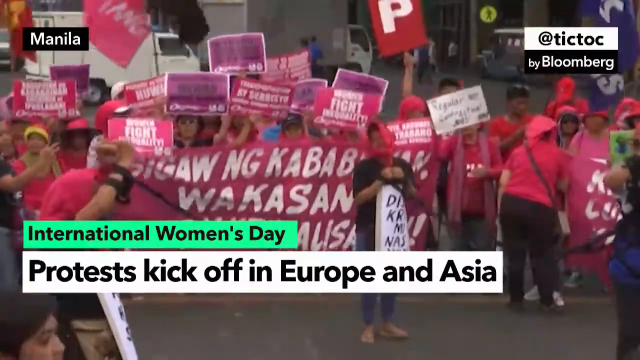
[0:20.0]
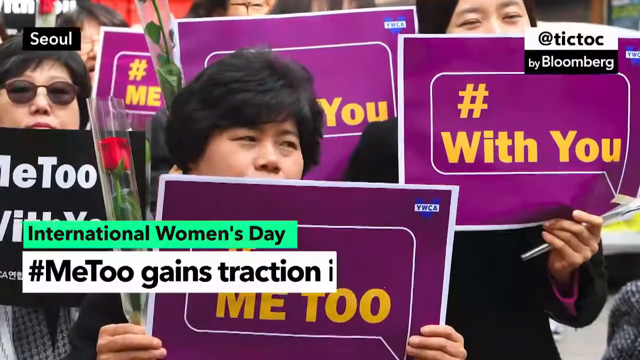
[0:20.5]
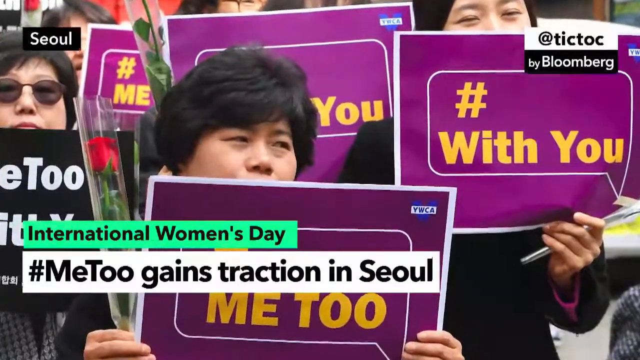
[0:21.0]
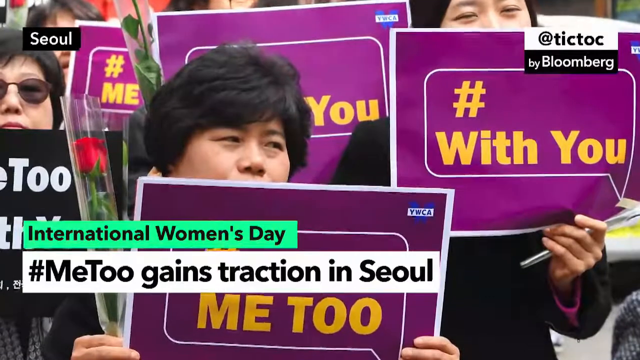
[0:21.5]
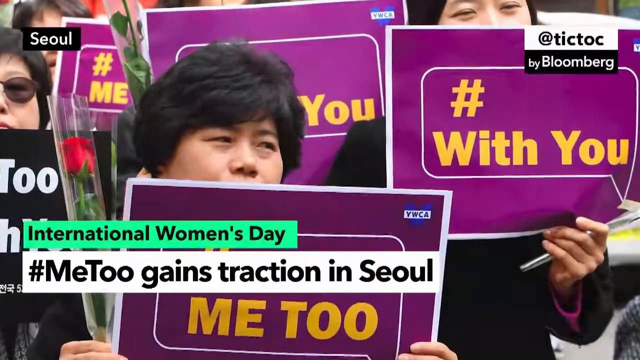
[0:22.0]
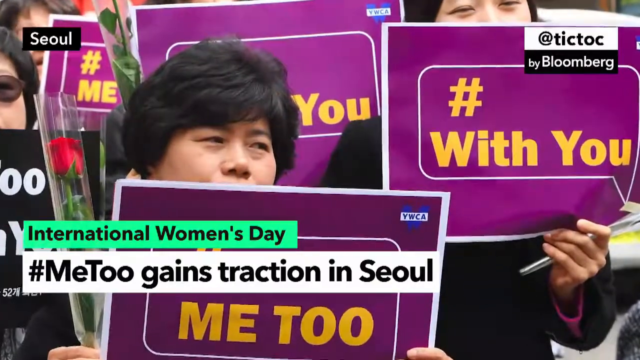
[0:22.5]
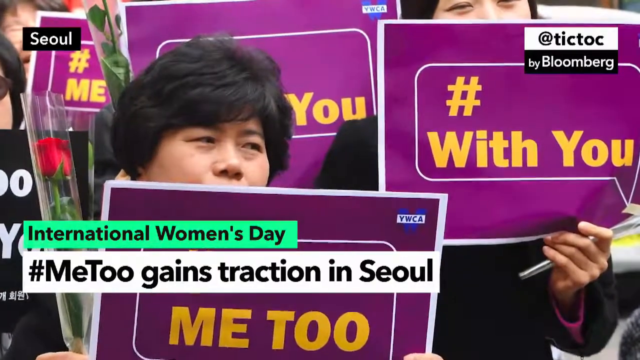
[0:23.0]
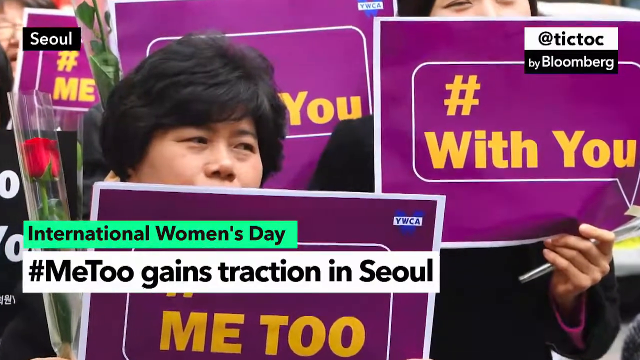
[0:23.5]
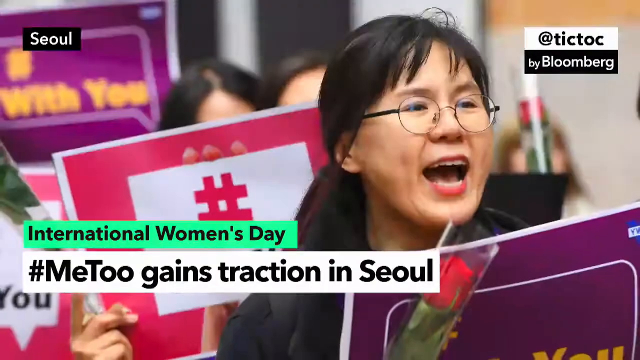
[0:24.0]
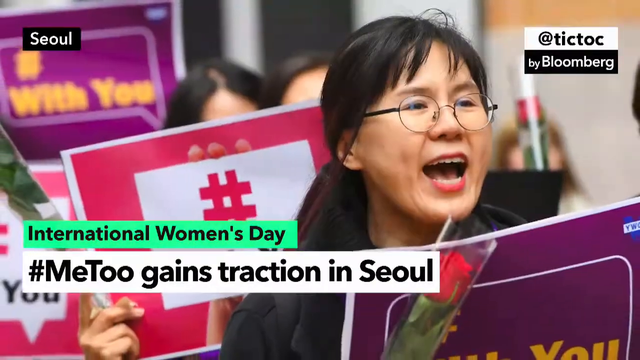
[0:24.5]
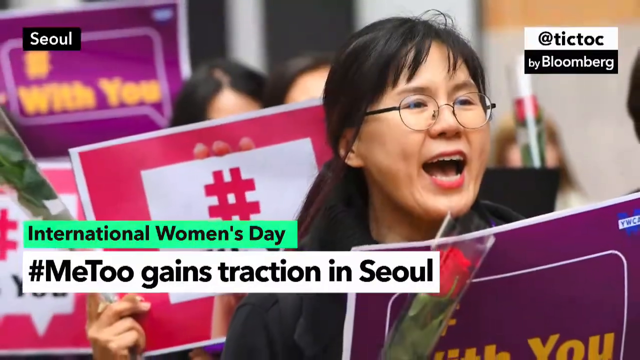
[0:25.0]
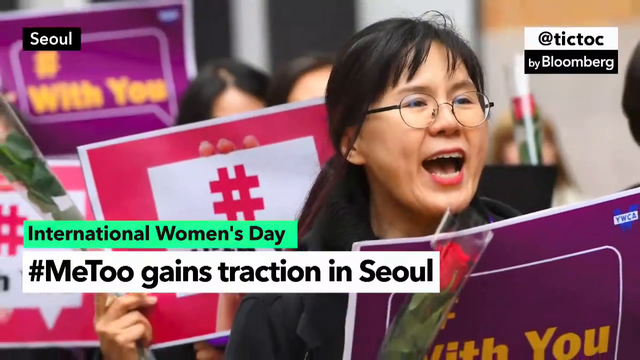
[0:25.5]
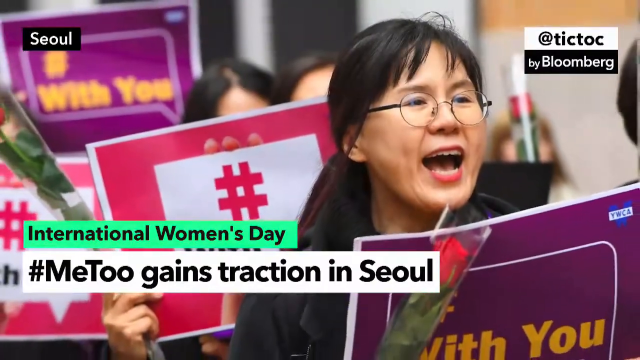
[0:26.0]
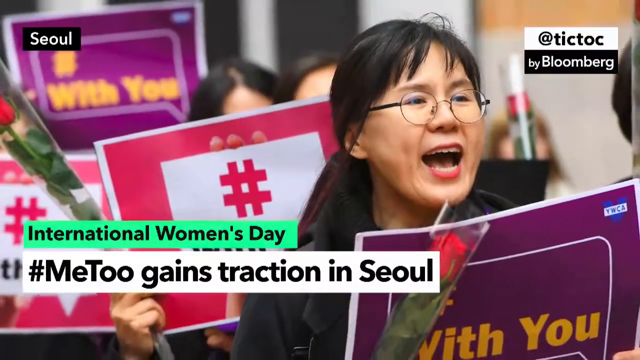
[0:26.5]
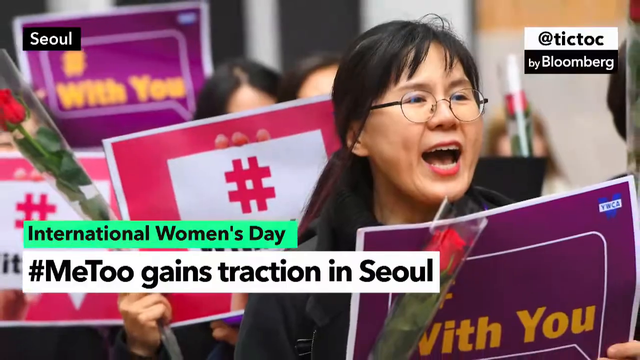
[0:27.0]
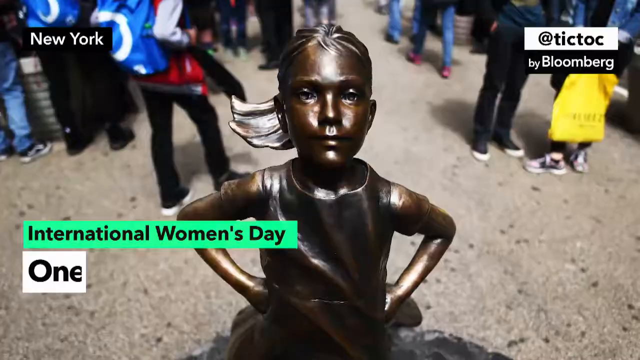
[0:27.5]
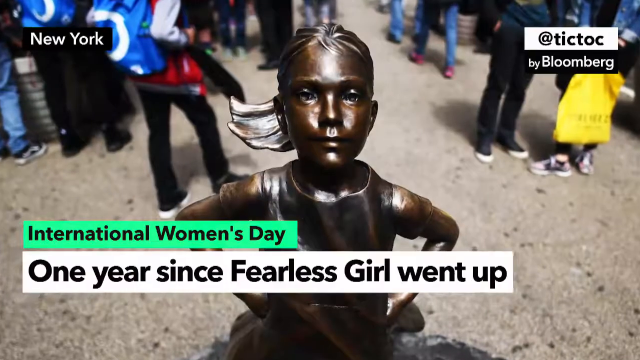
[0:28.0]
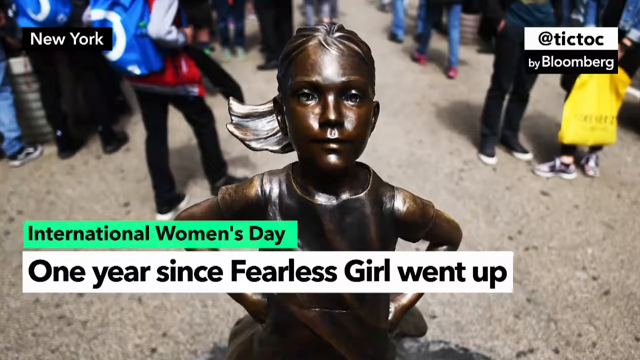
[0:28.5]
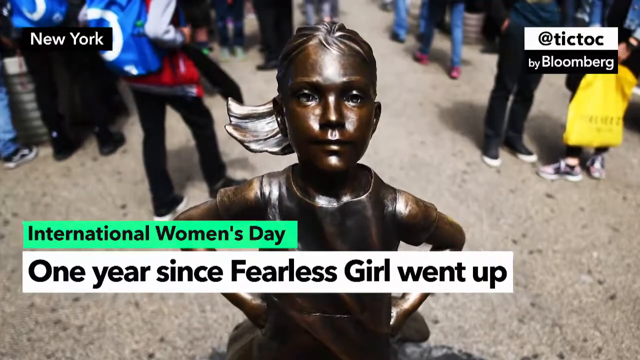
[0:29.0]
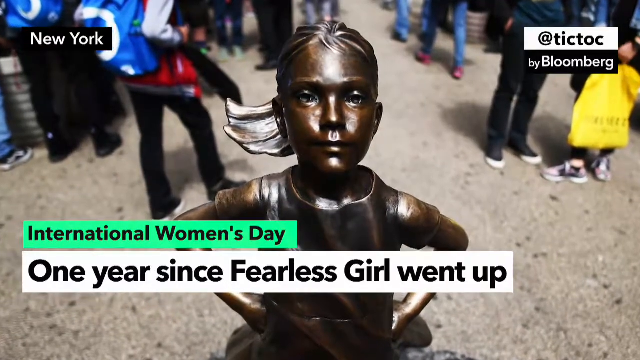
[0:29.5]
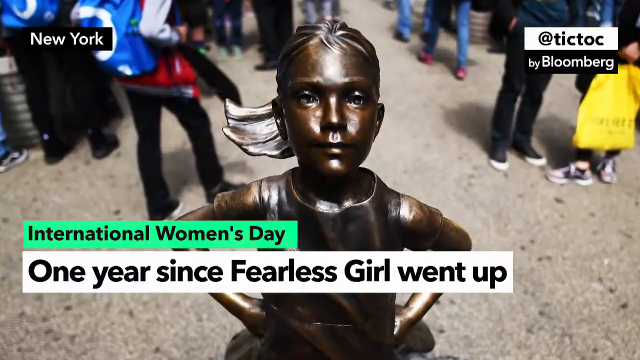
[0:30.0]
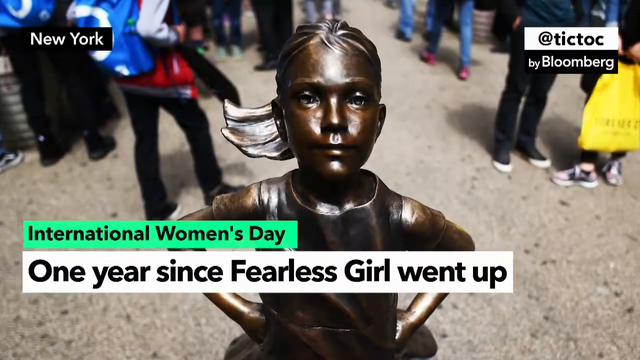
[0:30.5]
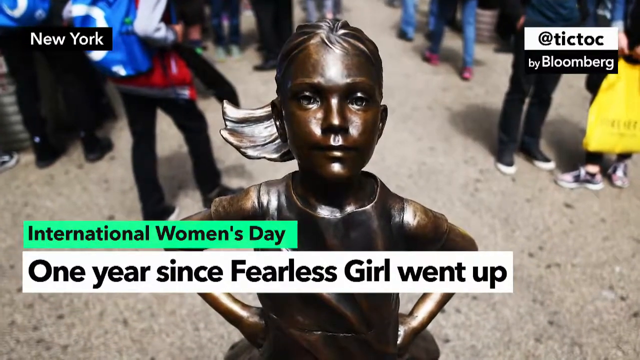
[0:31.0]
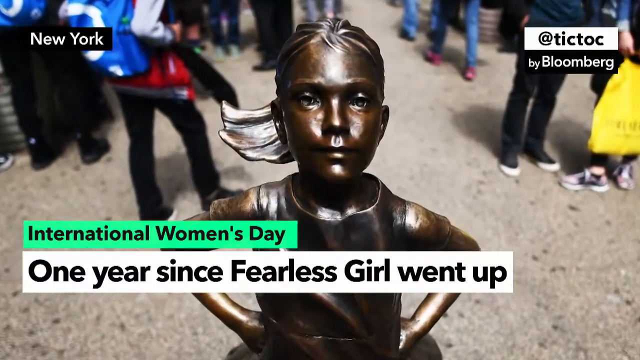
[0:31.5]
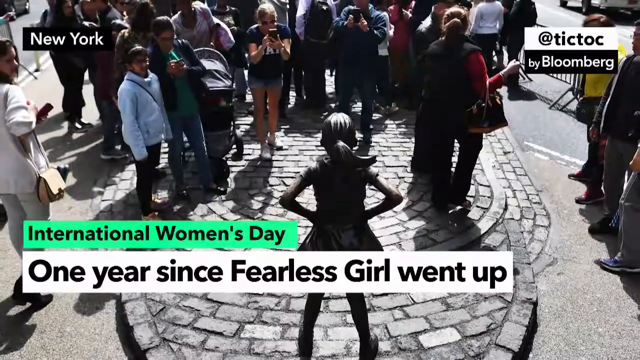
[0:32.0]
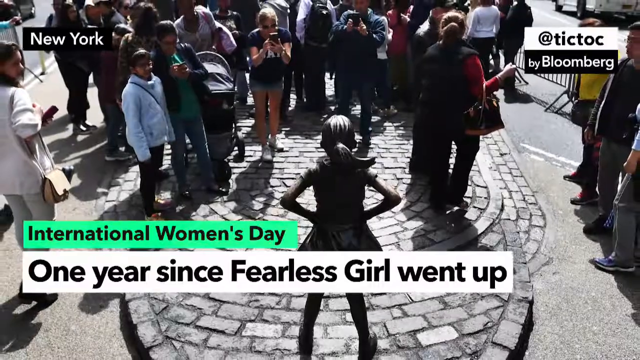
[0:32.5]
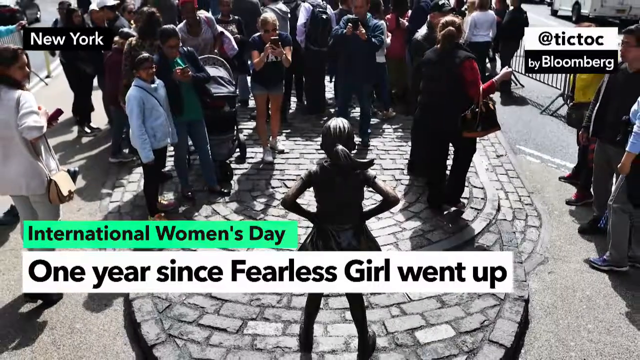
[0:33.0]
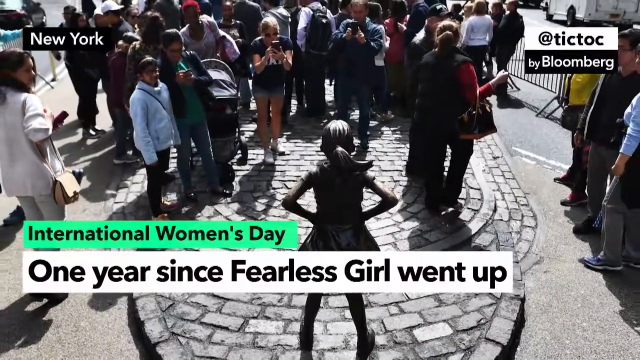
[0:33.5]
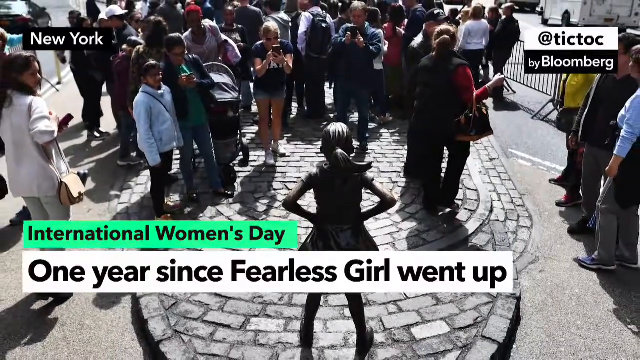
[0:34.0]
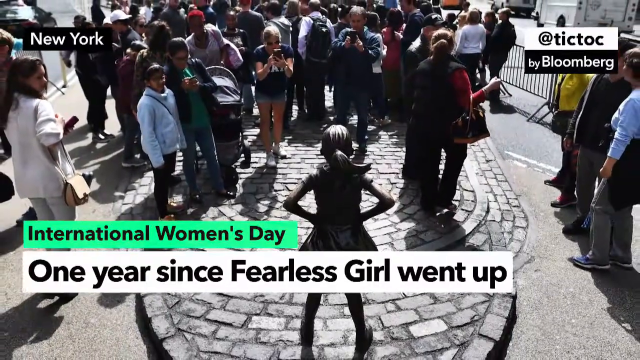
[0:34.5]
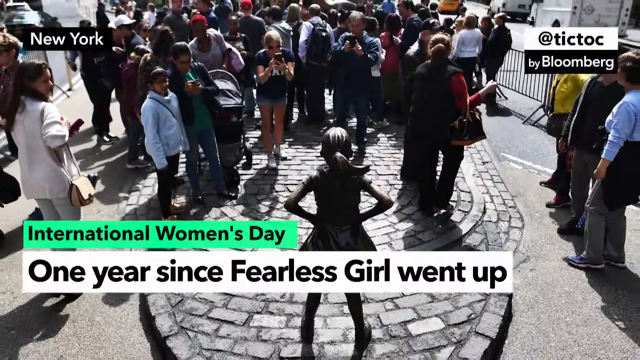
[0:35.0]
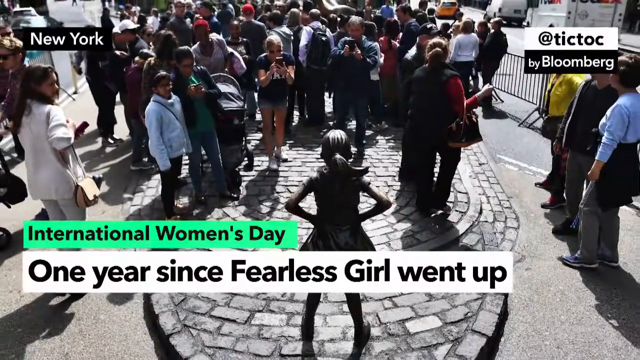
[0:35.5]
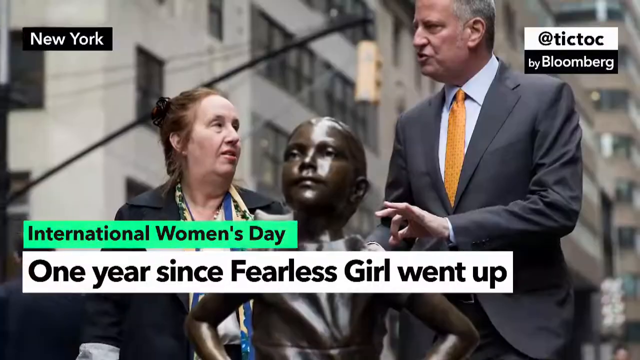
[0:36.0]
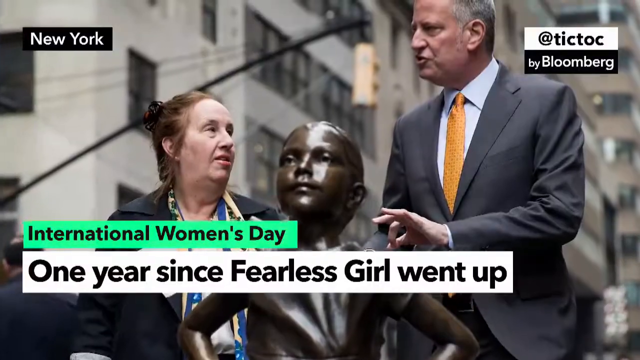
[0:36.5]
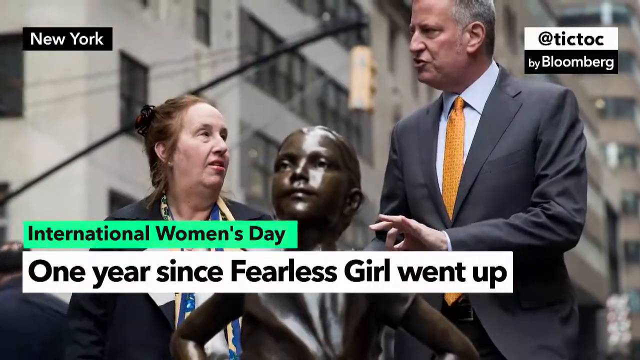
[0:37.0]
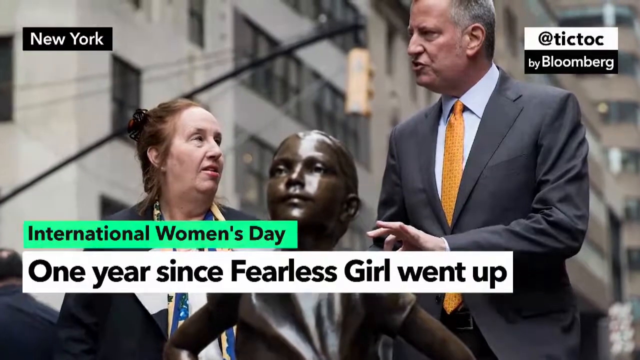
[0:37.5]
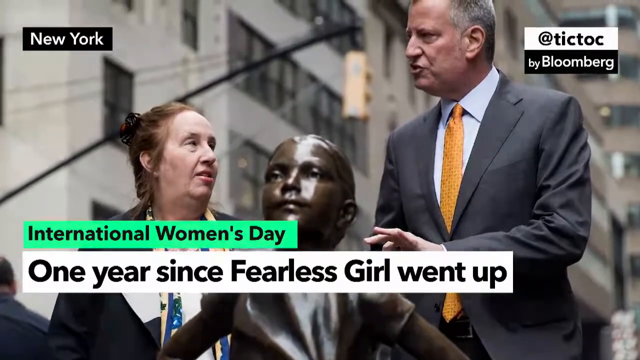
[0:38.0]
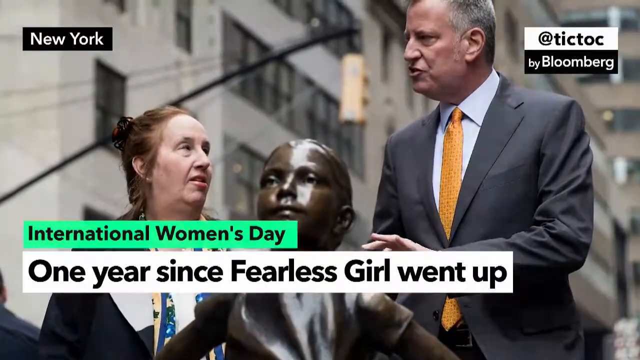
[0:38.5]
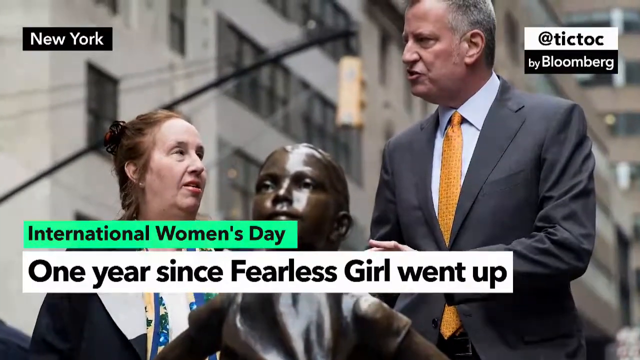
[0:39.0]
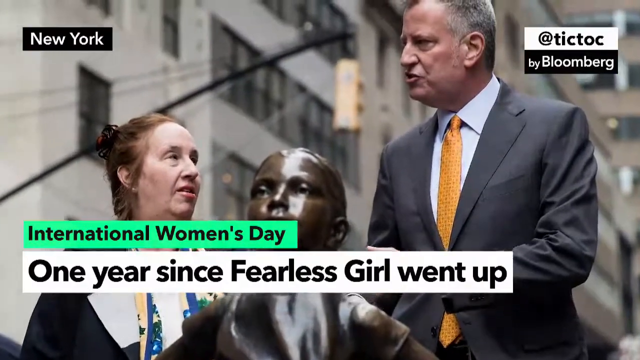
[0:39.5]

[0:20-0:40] Text refers to International Women's Day and to Seoul, South Korea, where the news item is from. The top right corner reads "a tiktok by bloombyte". The posters are made of paper, and the women holding them mostly have black hair and are South Korean; they seem to be enjoying themselves as they shout. A lady in glasses wearing makeup appears, along with the words "one year since fearless girl went up". The statue of a fearless girl is shown in New York, with women and protesters in the background who have come in full force. Many people are exchanging information, men from North Korea have come in support of the movement, and the men are enjoying their time.